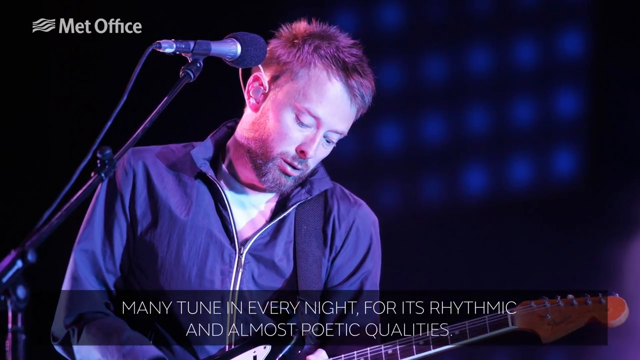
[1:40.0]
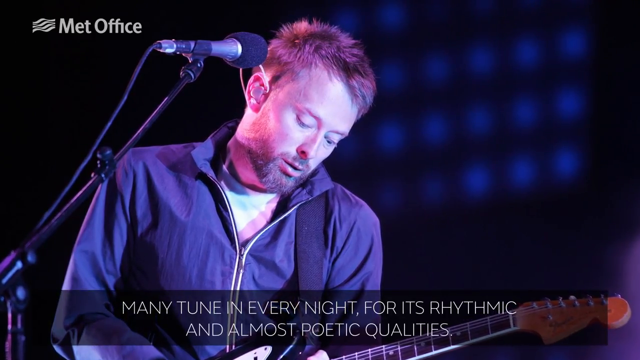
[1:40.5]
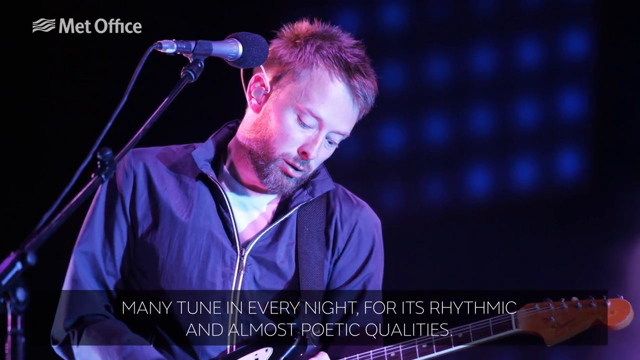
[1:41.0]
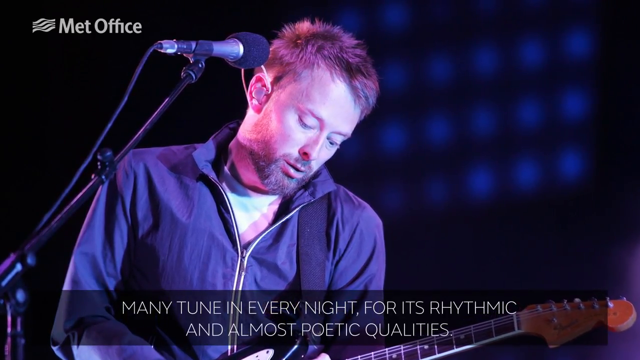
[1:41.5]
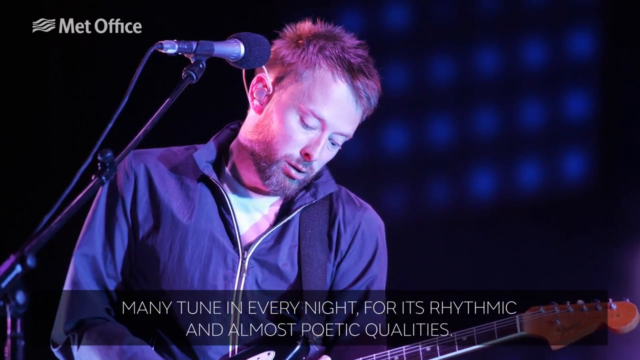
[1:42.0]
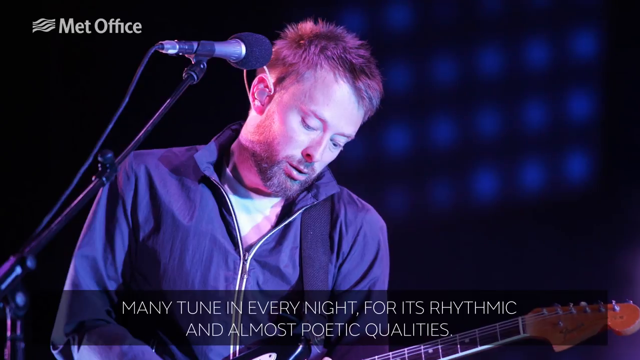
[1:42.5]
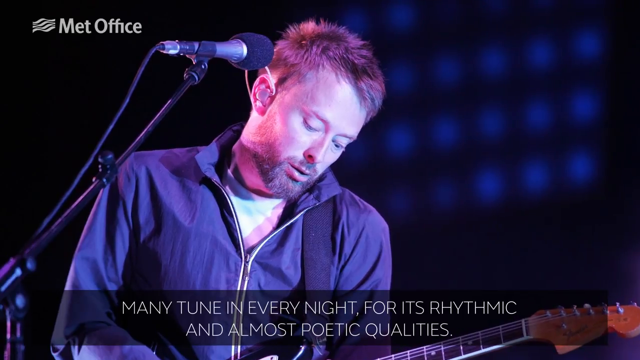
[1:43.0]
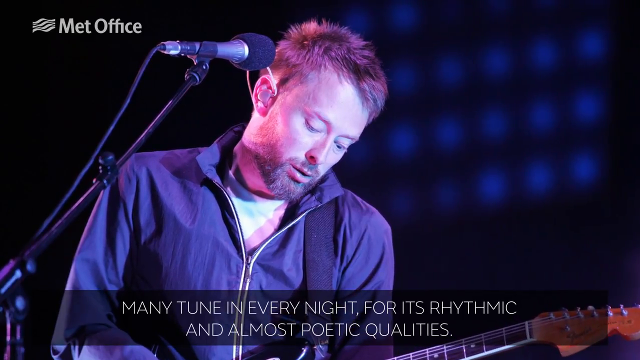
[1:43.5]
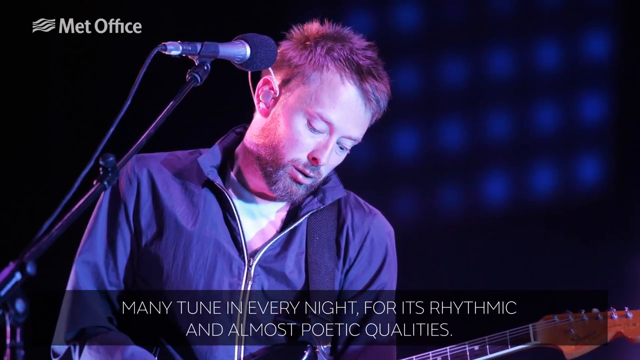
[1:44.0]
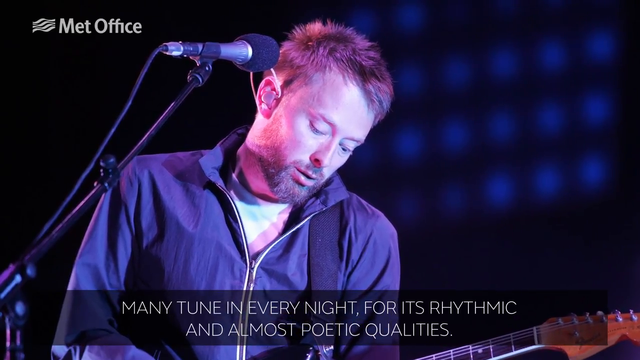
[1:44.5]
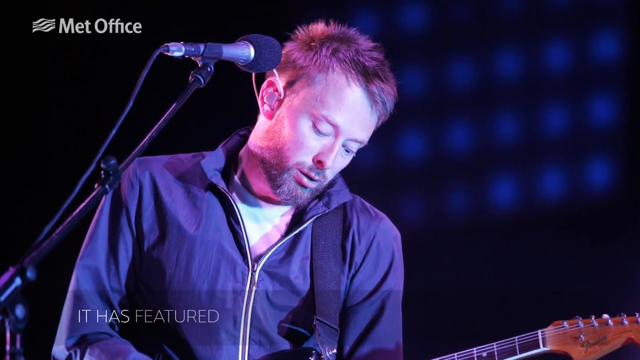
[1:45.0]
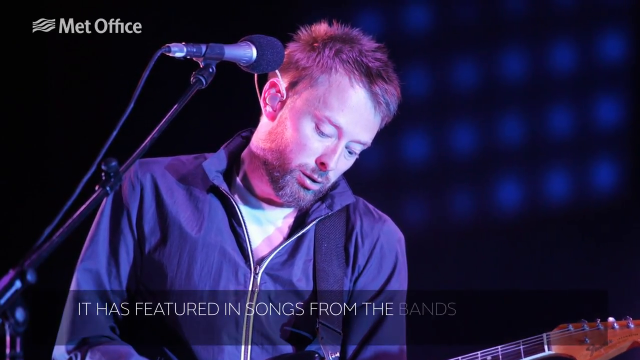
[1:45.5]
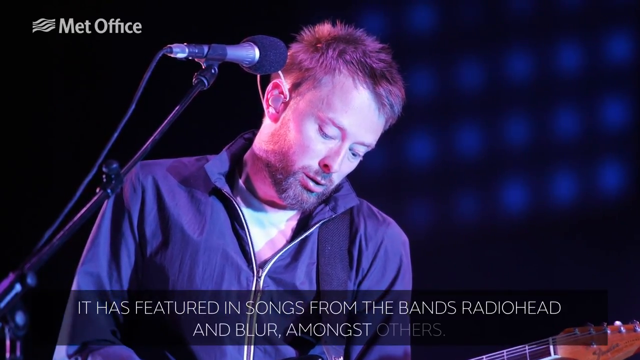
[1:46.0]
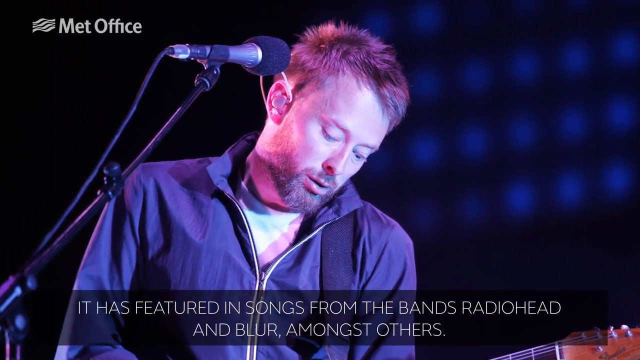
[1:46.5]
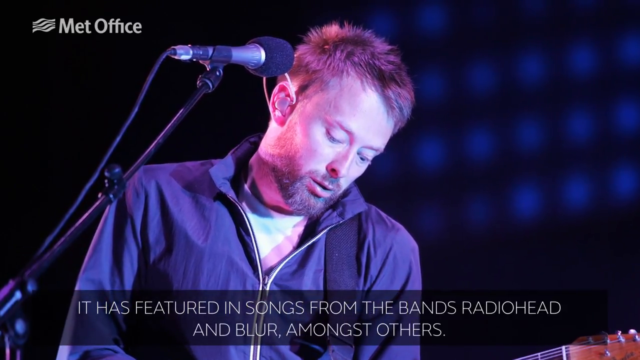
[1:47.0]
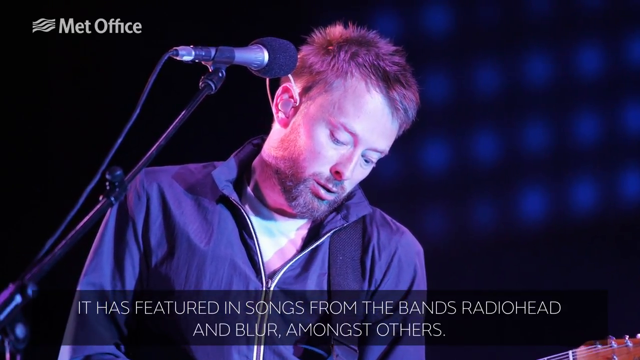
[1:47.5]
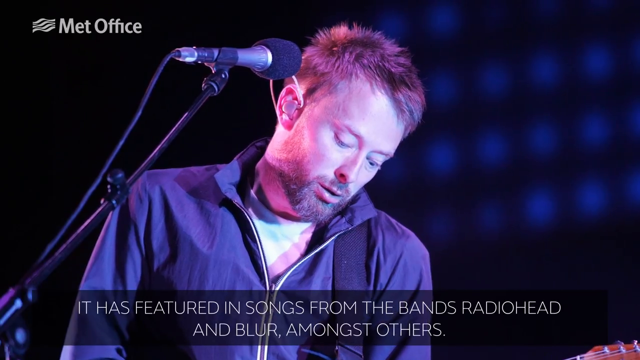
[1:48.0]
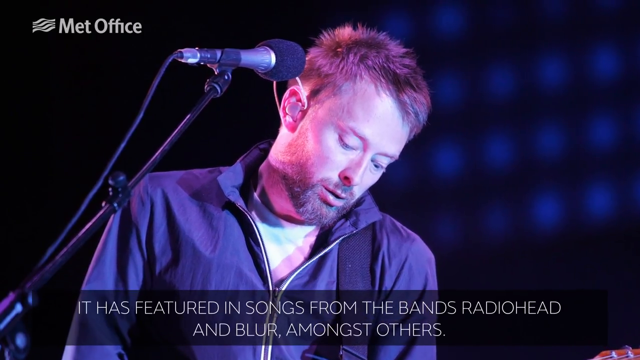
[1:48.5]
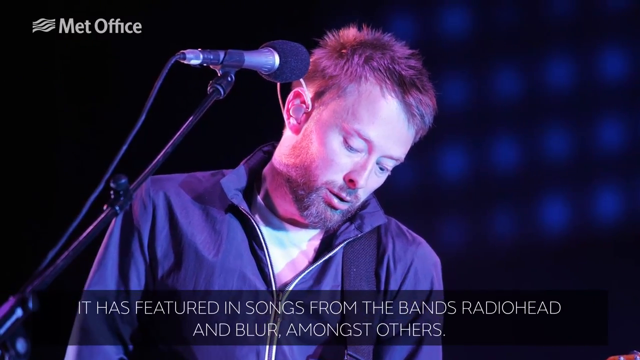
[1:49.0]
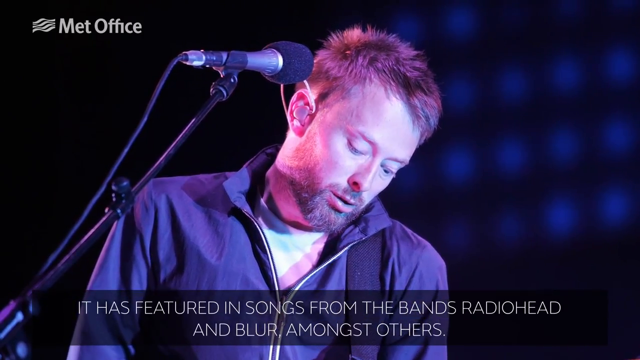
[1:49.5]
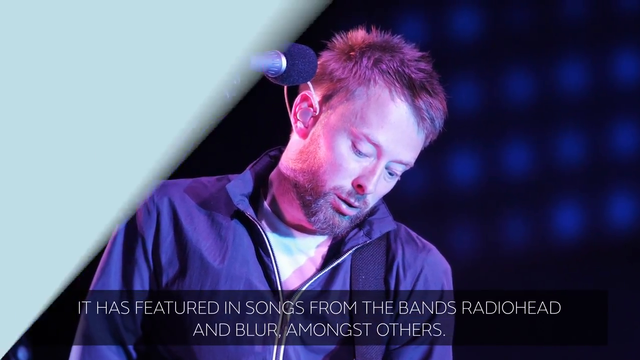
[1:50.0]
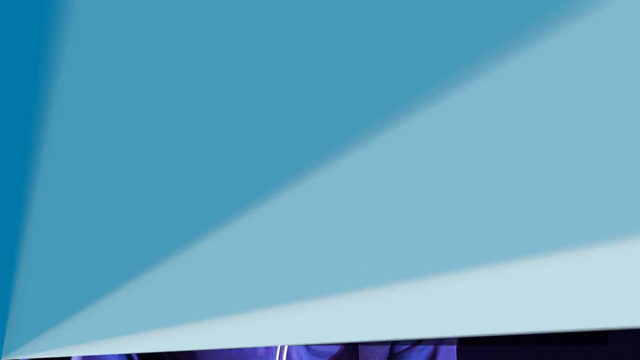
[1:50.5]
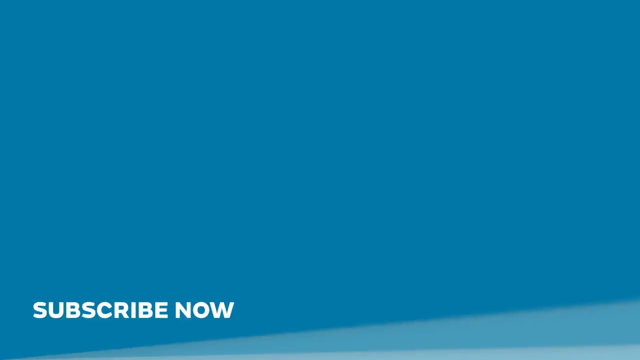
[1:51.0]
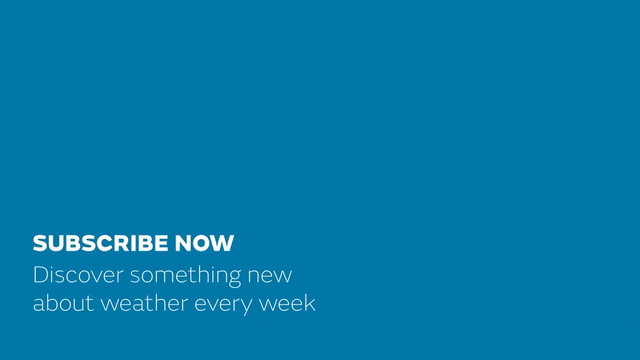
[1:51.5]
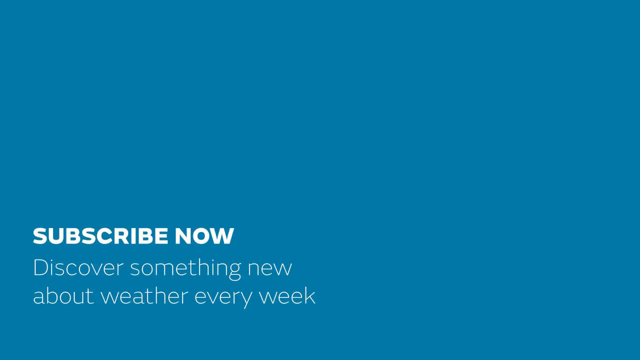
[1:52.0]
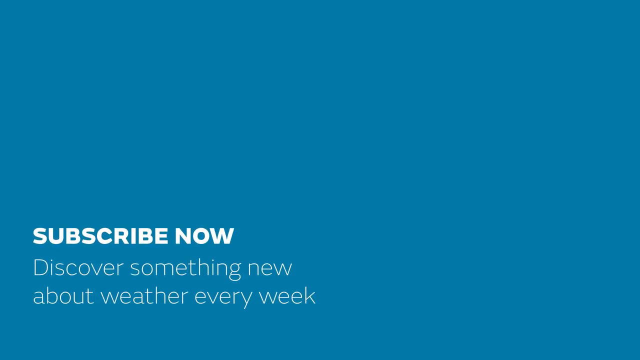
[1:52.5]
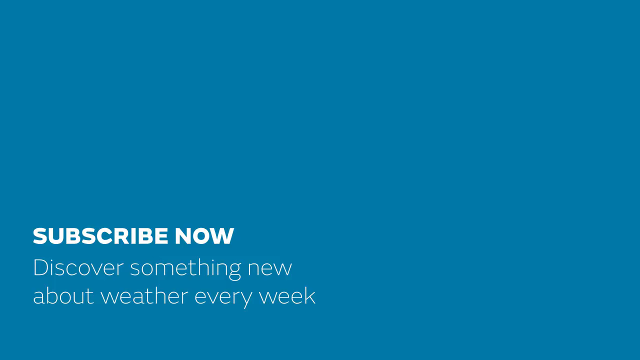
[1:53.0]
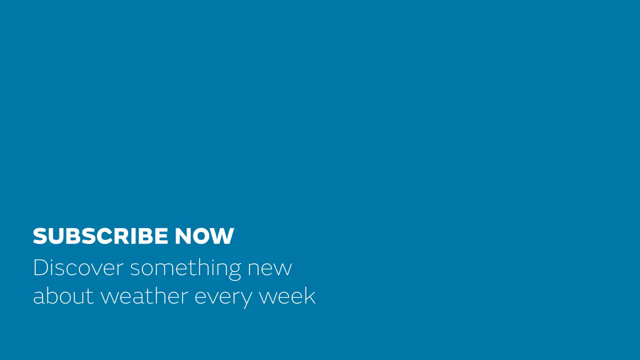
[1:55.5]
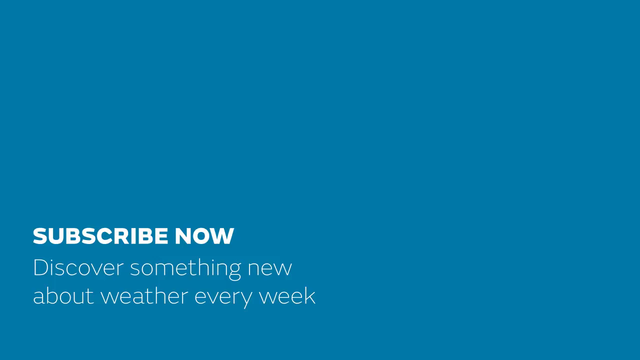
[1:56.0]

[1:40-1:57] An image of the guitarist is shown, with some text written behind him. He holds a guitar, looking at it closely while playing it. The video then shows the text "subscribe now discover something new about weather every week", encouraging viewers to subscribe, and it is from the Met Office.